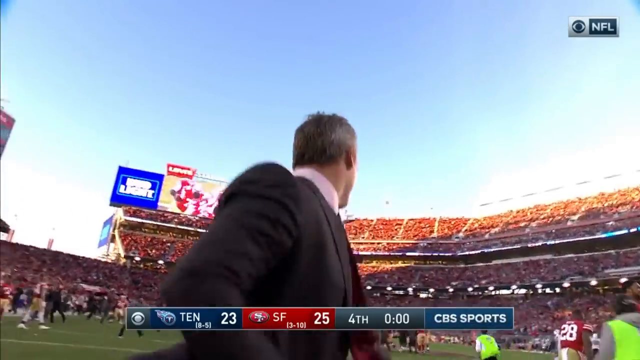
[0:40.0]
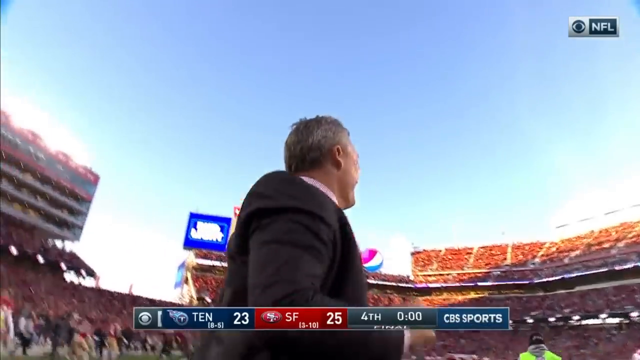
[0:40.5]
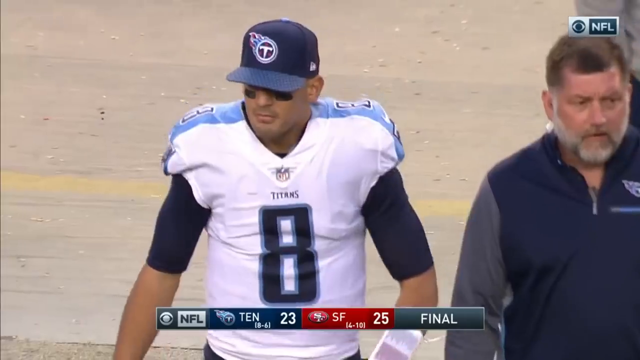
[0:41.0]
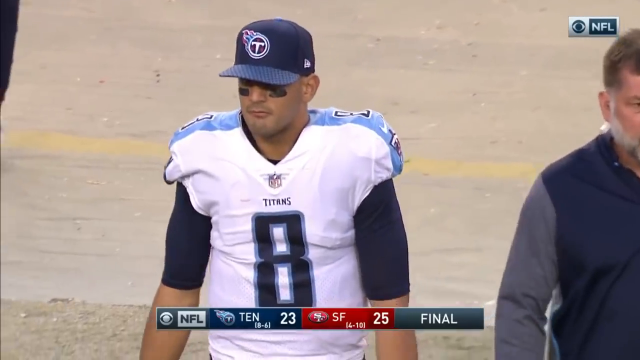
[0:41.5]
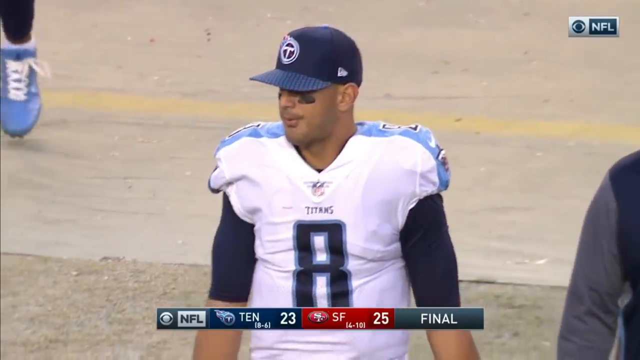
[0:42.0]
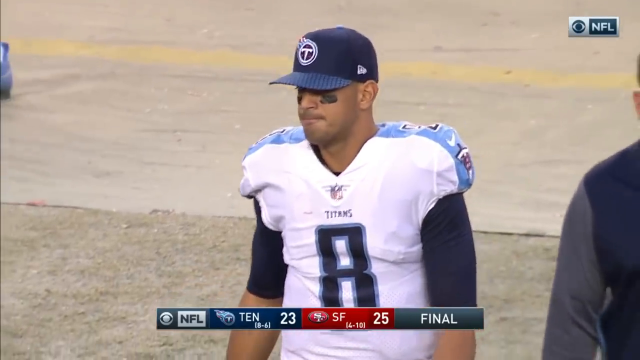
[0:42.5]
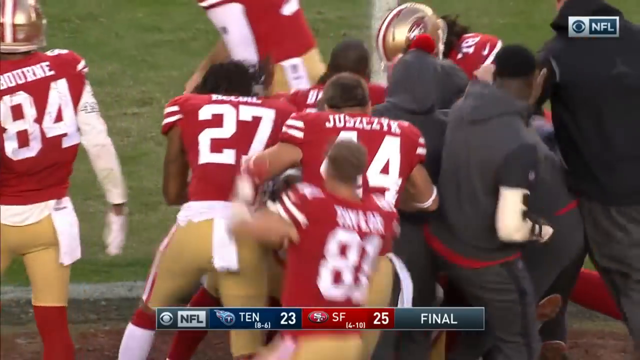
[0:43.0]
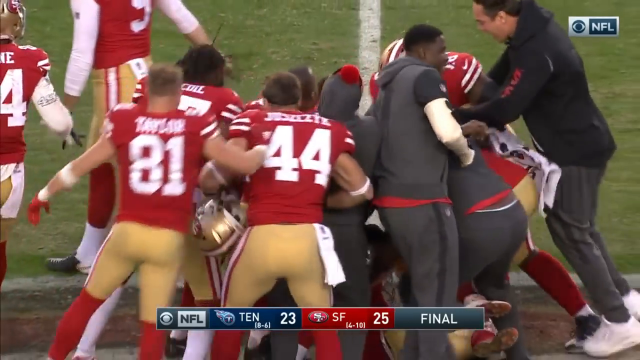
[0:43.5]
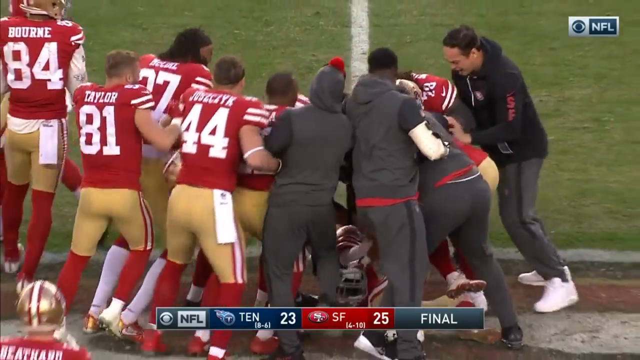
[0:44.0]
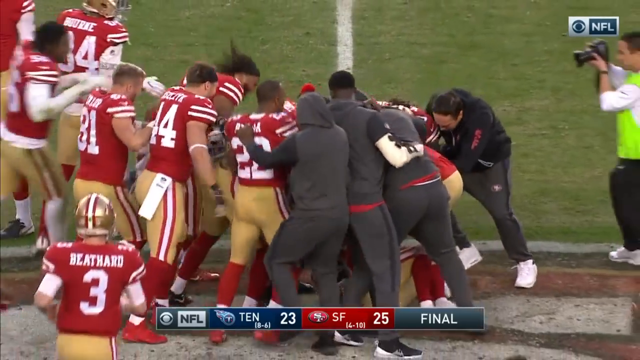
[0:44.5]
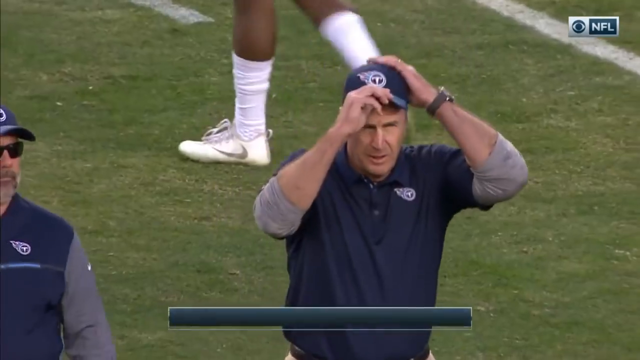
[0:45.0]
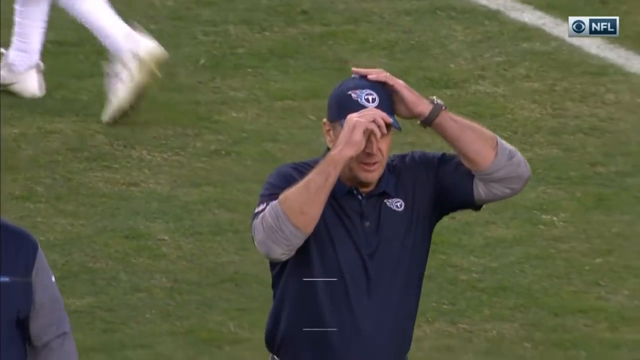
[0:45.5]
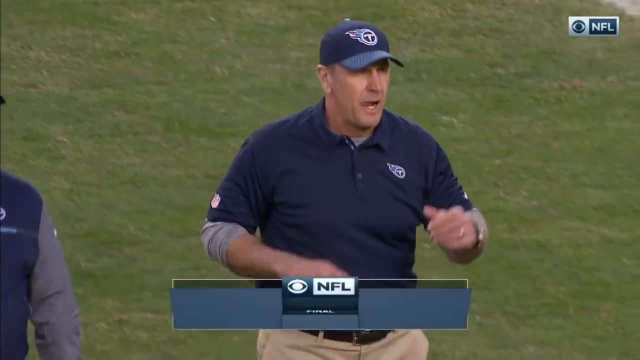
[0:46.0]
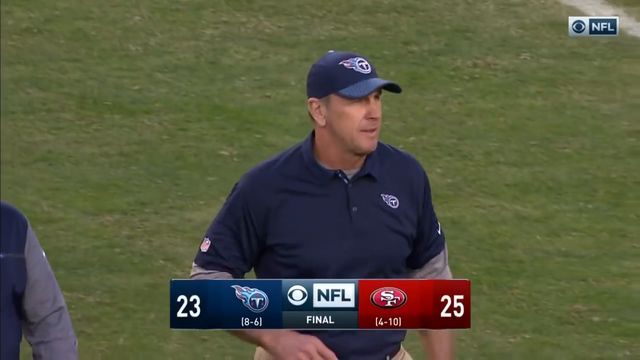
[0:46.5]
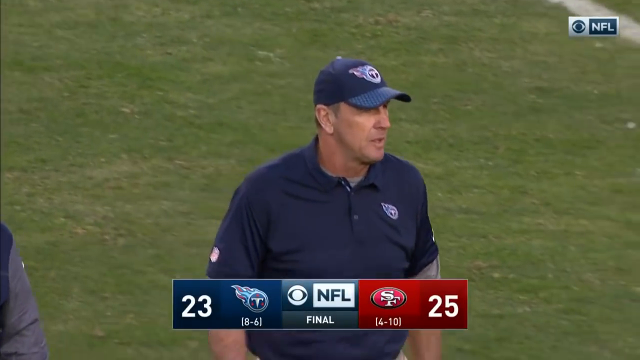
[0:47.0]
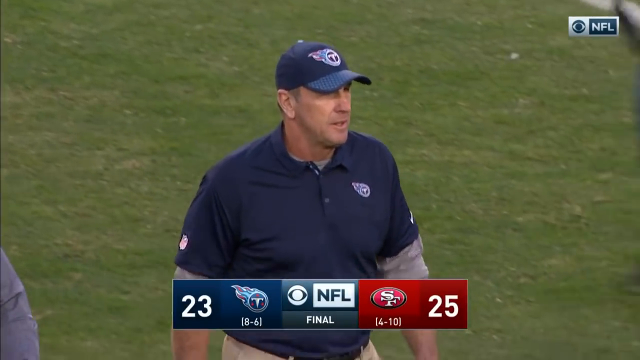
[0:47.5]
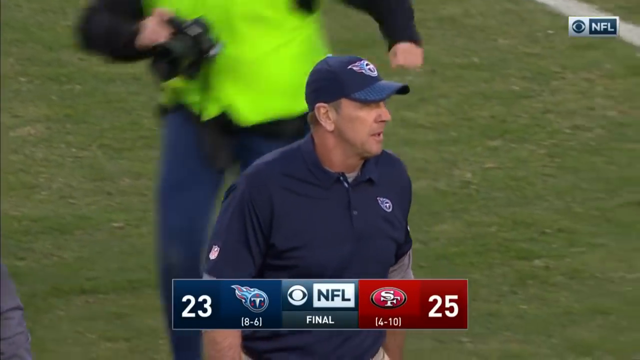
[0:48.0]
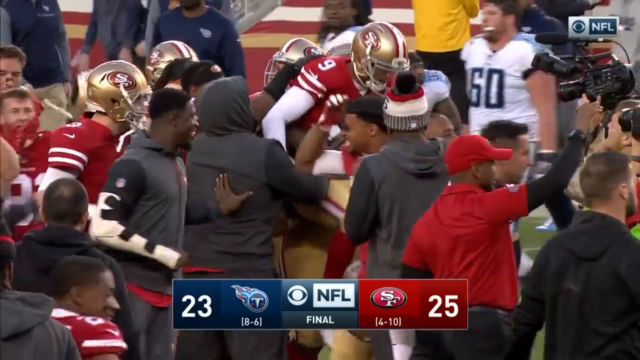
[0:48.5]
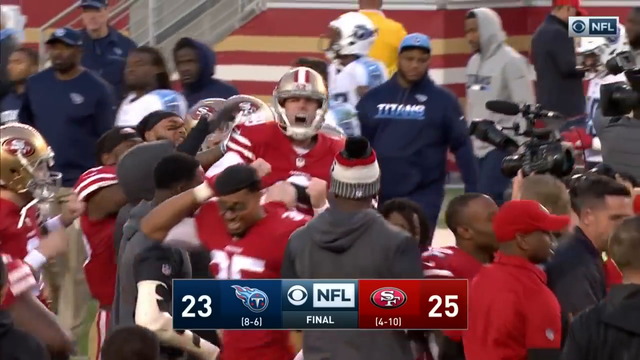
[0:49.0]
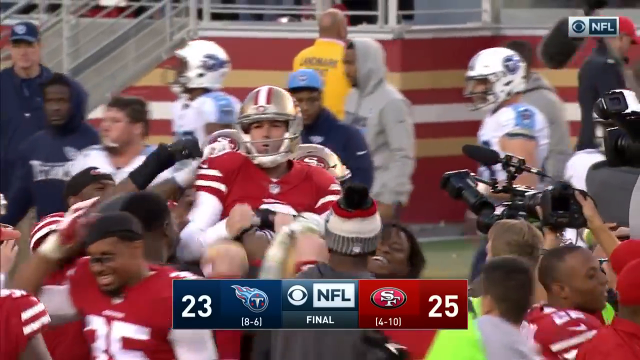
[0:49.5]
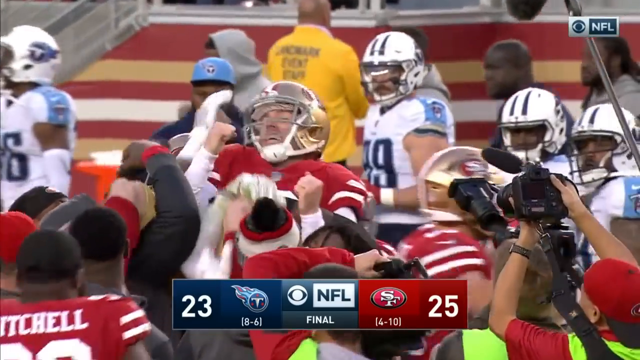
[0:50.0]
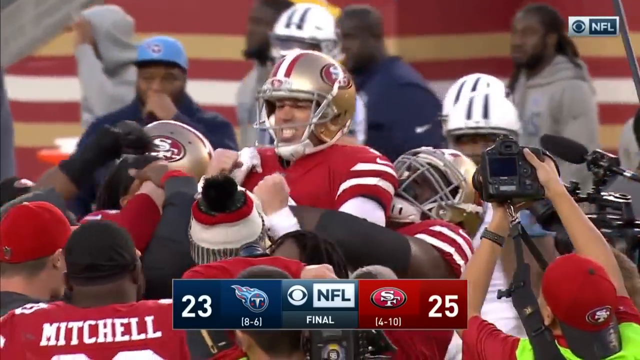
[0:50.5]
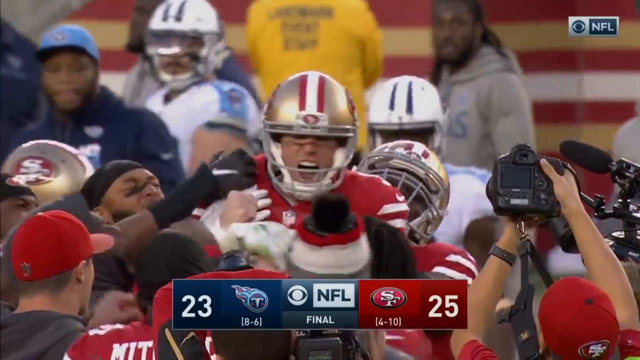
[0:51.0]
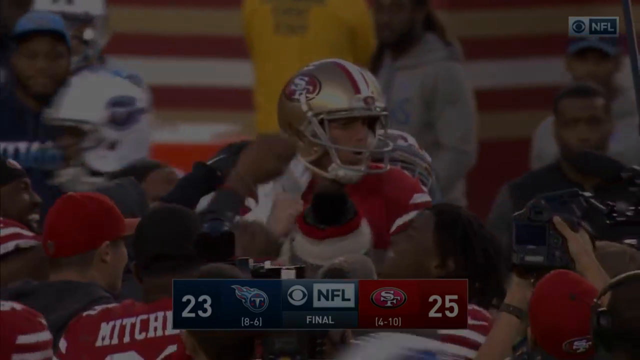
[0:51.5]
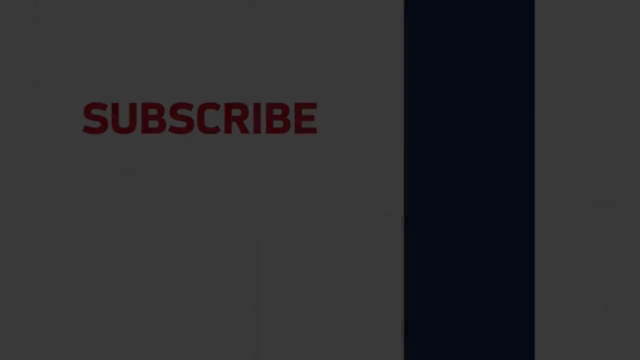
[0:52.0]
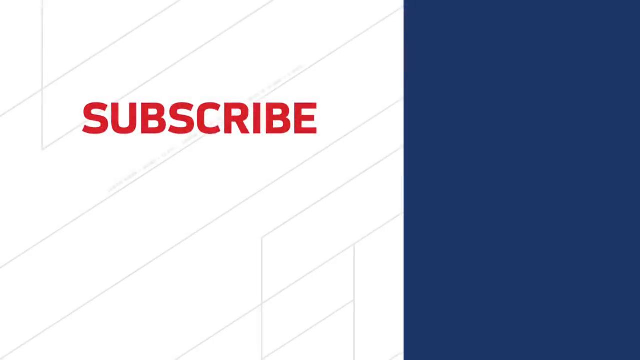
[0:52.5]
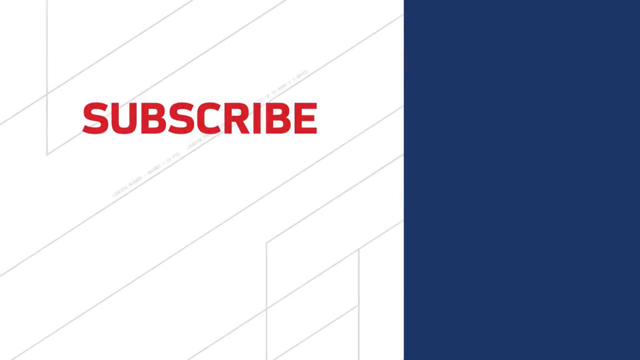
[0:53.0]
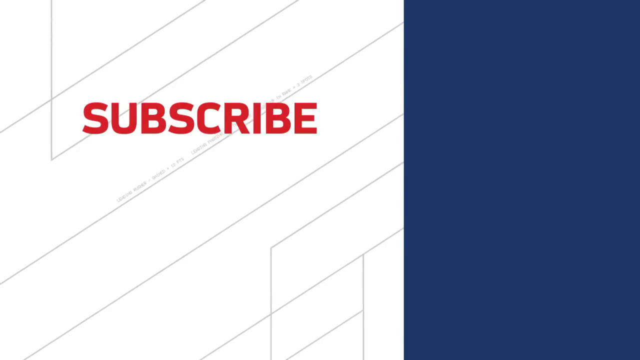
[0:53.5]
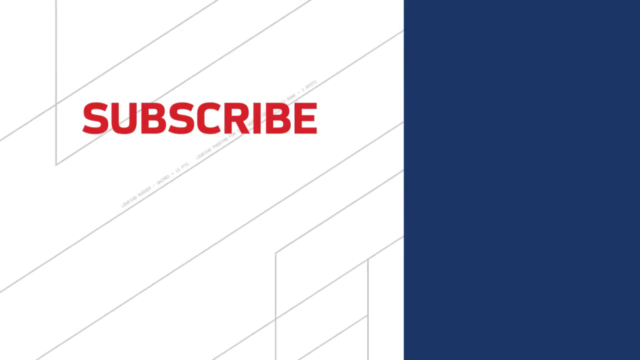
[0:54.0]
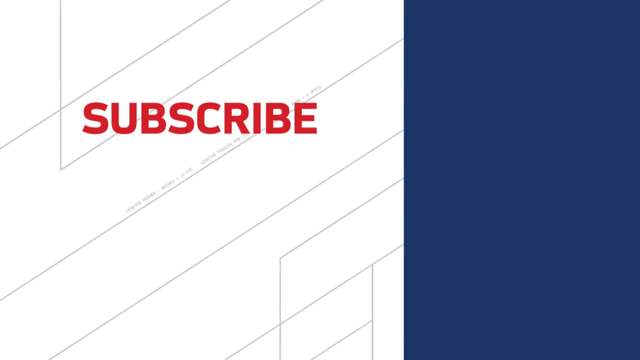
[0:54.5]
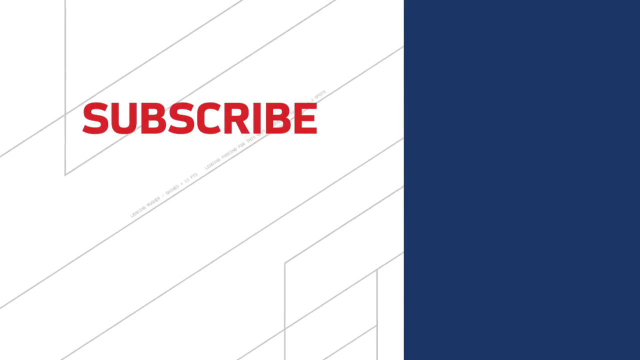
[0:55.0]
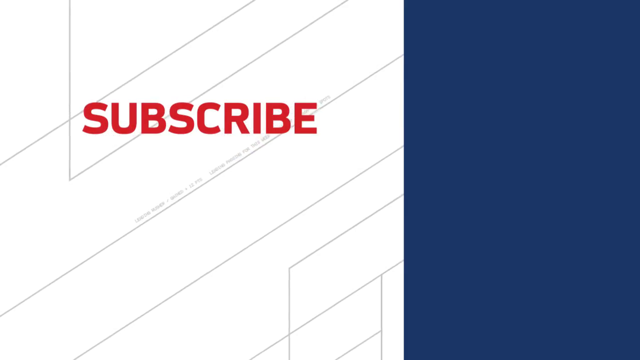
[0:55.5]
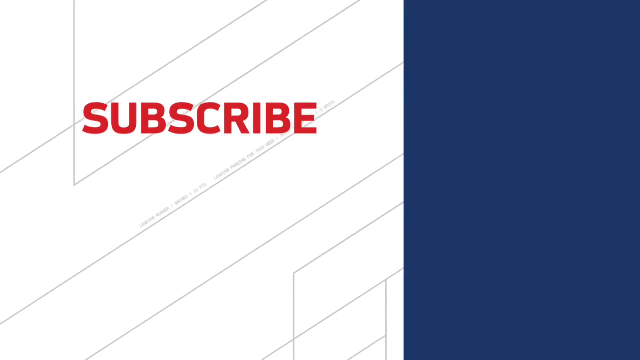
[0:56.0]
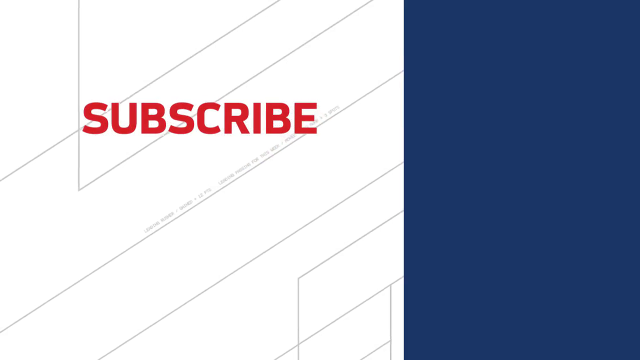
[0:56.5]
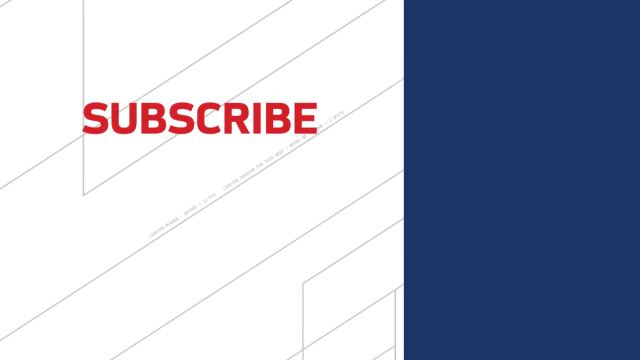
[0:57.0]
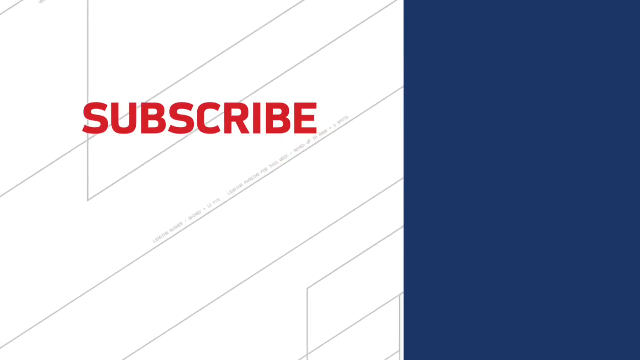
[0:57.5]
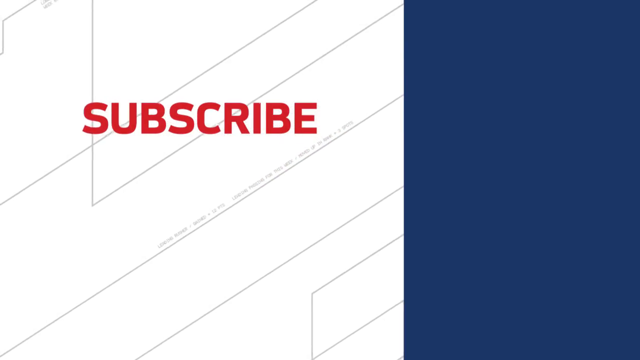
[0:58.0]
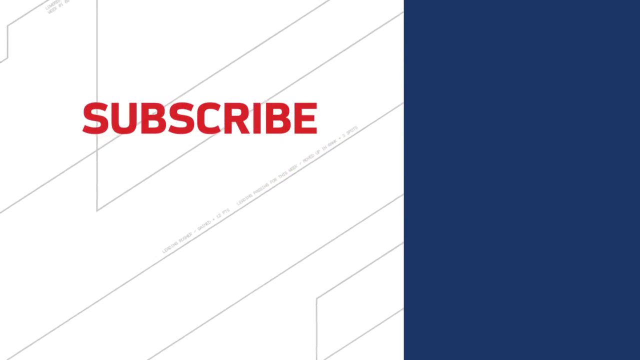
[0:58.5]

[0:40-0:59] A man in a black jacket with a red tie runs around with a smile on his face, with what looks like a full stadium of people behind him. It is the end of a football match. The video cuts to a figure in a white top, apparently from the losing team, who looks very miserable as he walks; he wears a baseball cap and has black sunscreen beneath both eyes. Next comes a group of players in red on the pitch jumping up and down, celebrating a victory. A man in blue walks off the pitch with his right arm bent at the elbow and his fingers on top of the peak of his cap, and his left arm bent at the elbow with his hand touching the top of his cap. He moves both hands down to his sides and walks, looking to his left. The video cuts back to players in red celebrating again. A player in the centre is held up from behind as two hands come in front of him and lift him; he wiggles his hands in front of him, celebrating, and his mouth moves as he shouts something. The screen cuts to black, and then red text reading "subscribe" appears. The left side of the screen, where "subscribe" is, is white, and the right side is blue with pinstripes running through it.